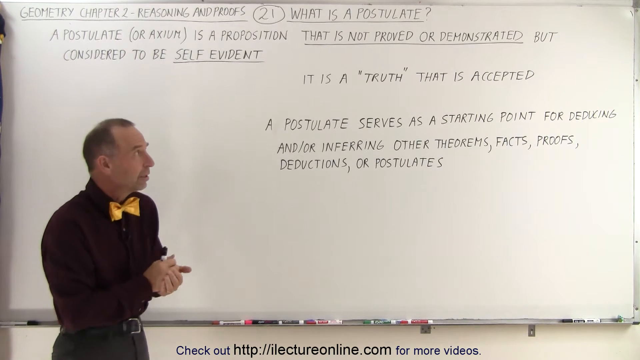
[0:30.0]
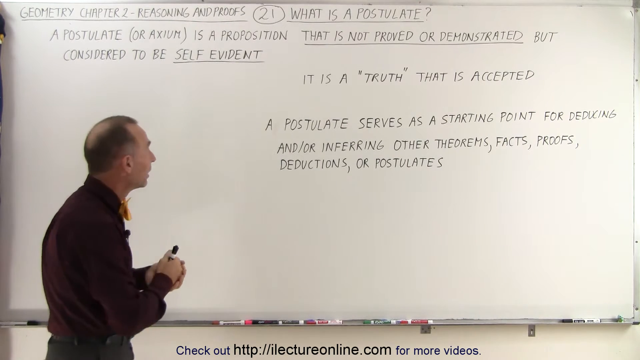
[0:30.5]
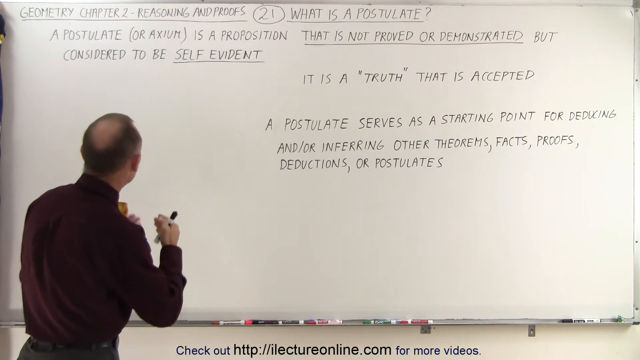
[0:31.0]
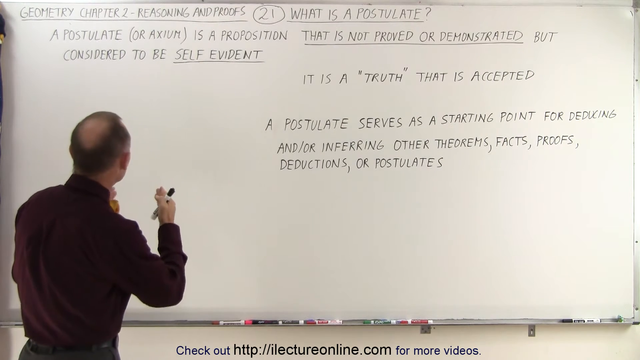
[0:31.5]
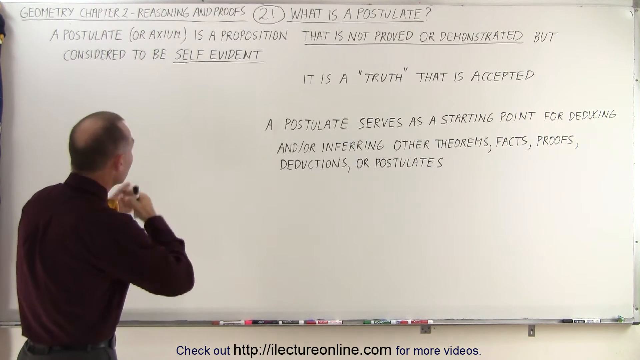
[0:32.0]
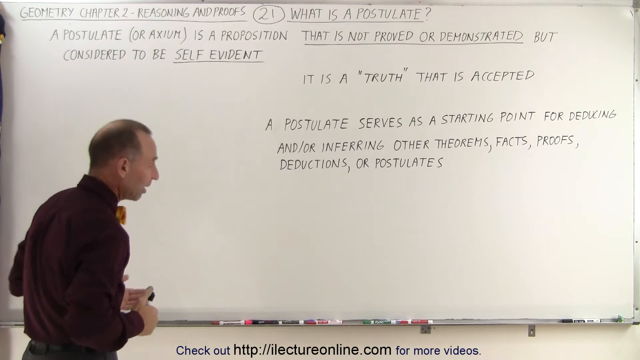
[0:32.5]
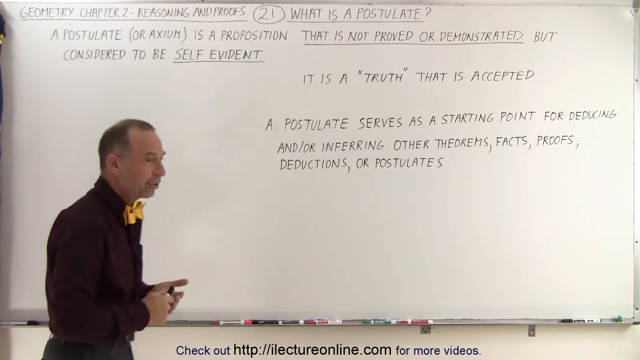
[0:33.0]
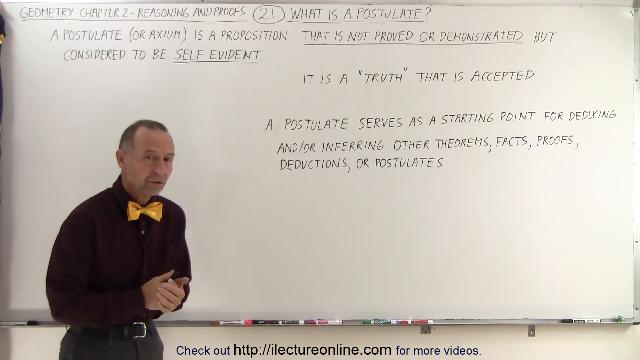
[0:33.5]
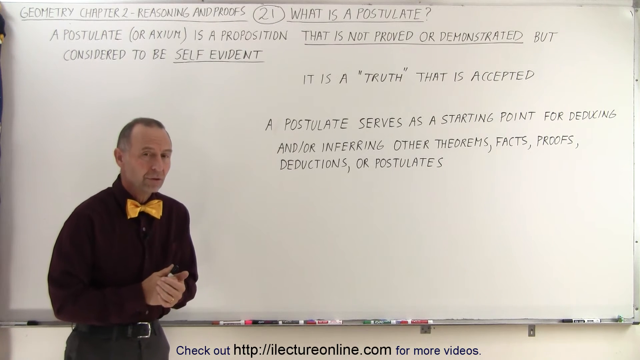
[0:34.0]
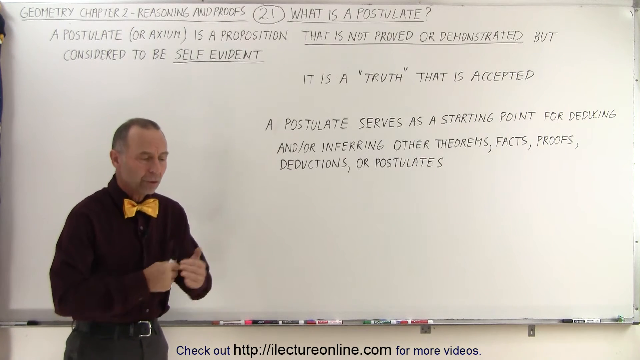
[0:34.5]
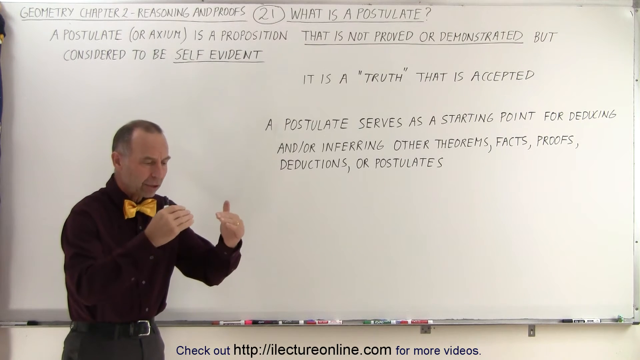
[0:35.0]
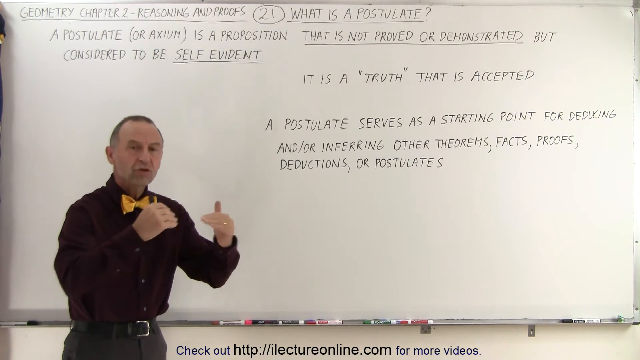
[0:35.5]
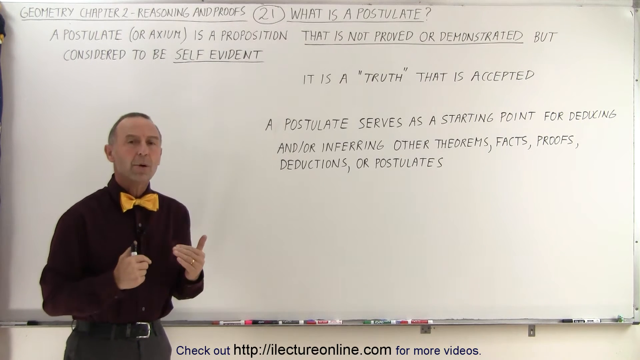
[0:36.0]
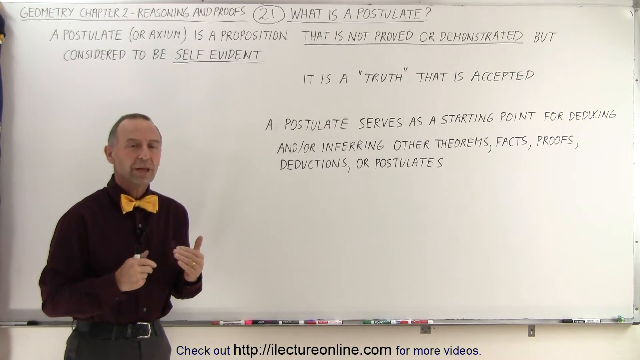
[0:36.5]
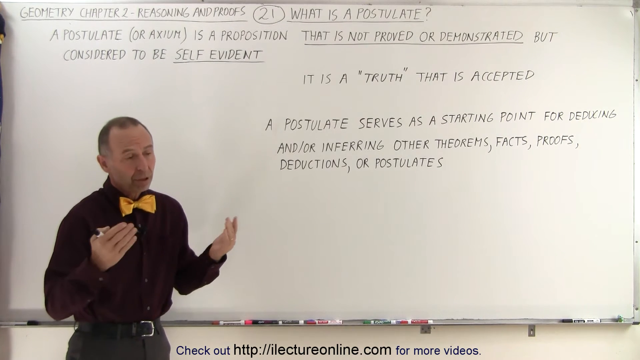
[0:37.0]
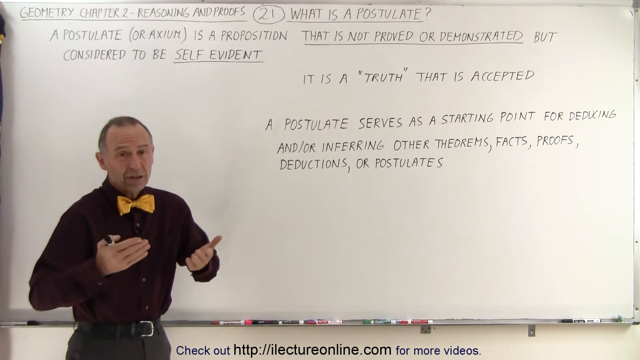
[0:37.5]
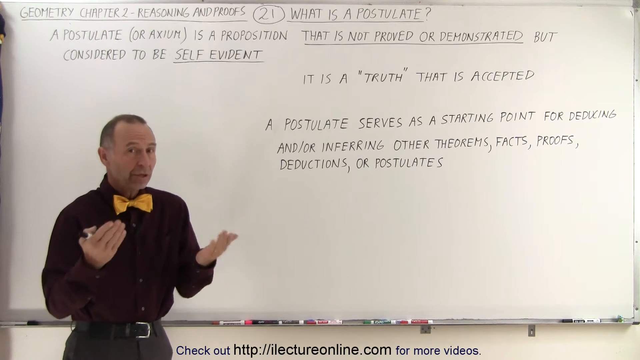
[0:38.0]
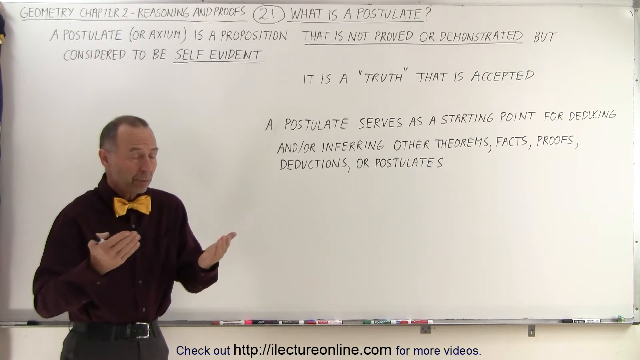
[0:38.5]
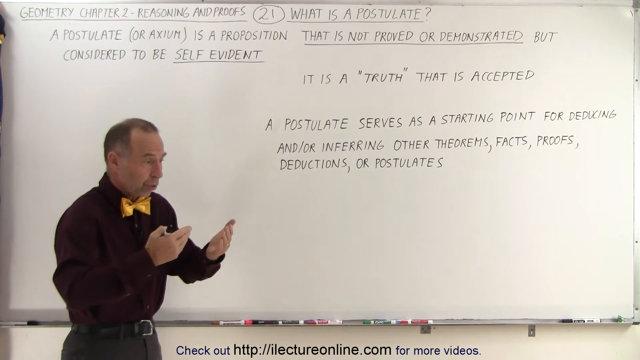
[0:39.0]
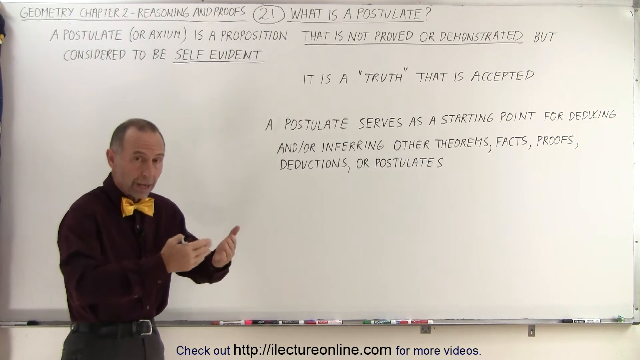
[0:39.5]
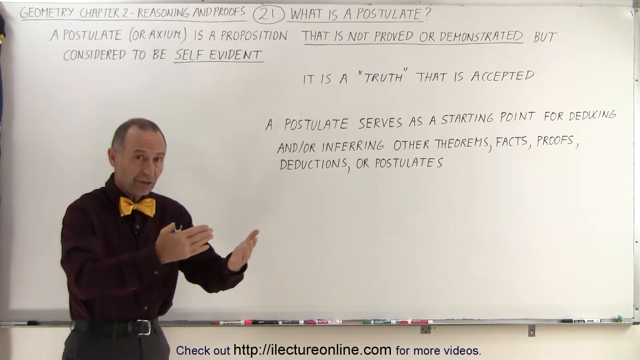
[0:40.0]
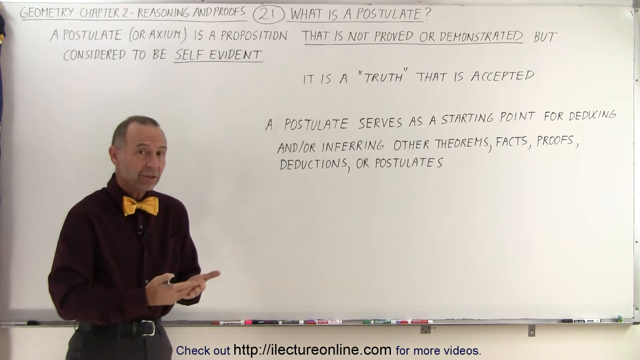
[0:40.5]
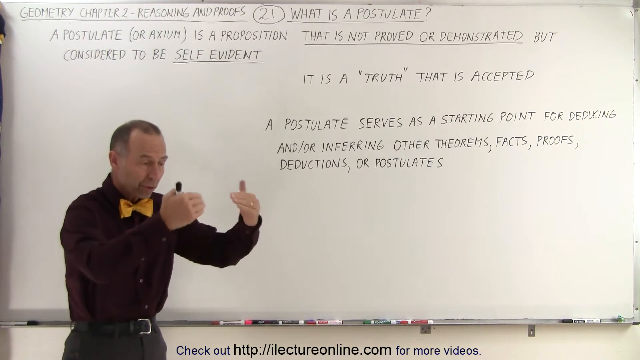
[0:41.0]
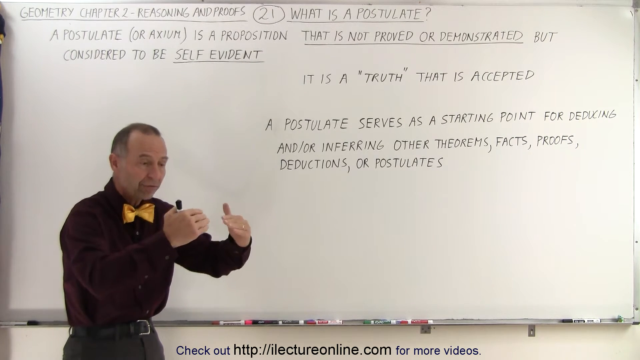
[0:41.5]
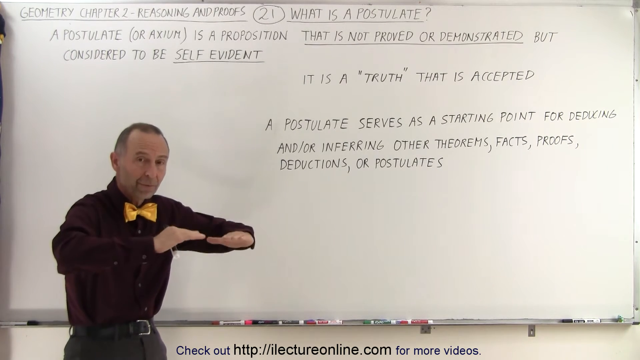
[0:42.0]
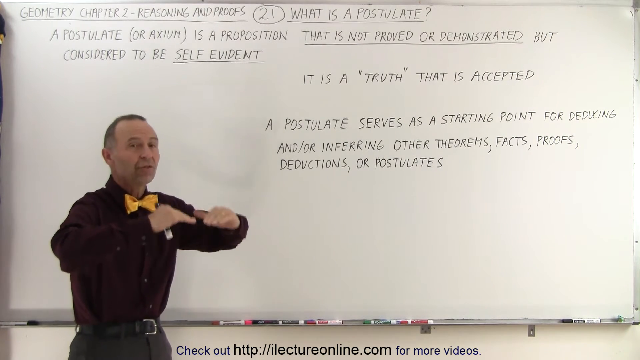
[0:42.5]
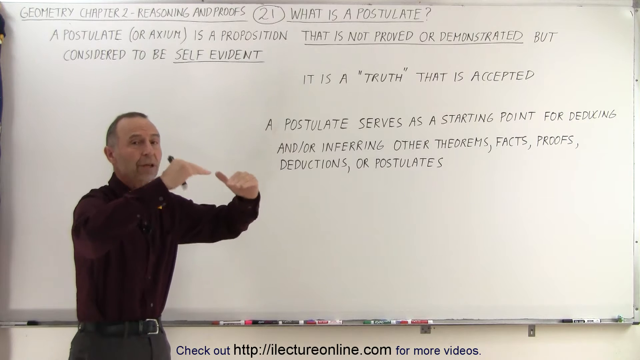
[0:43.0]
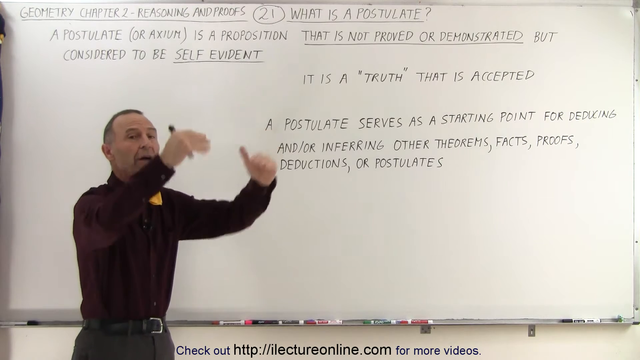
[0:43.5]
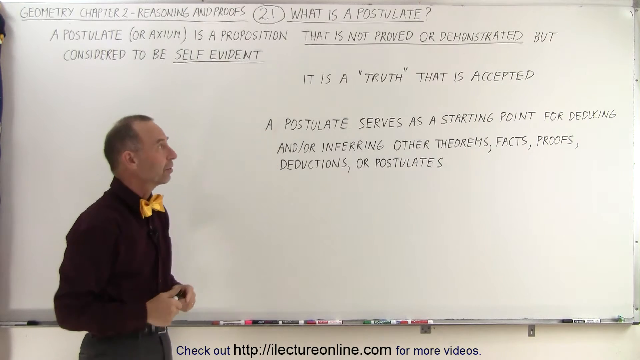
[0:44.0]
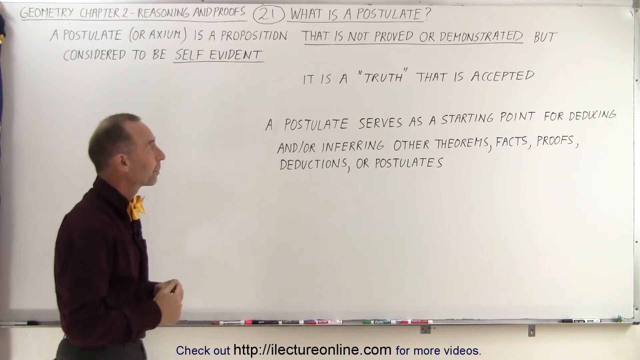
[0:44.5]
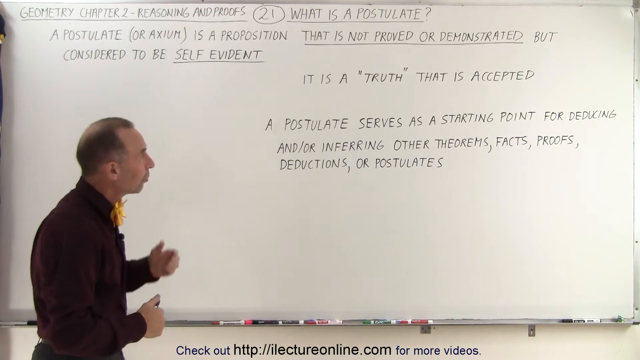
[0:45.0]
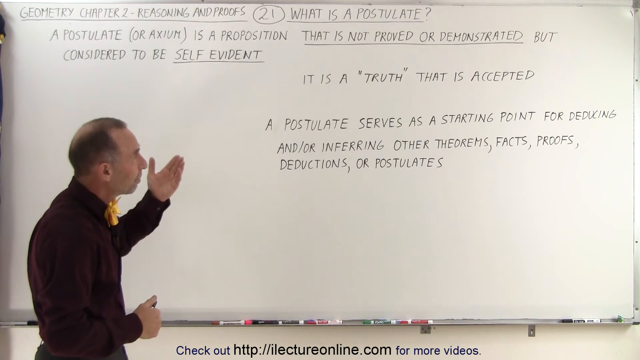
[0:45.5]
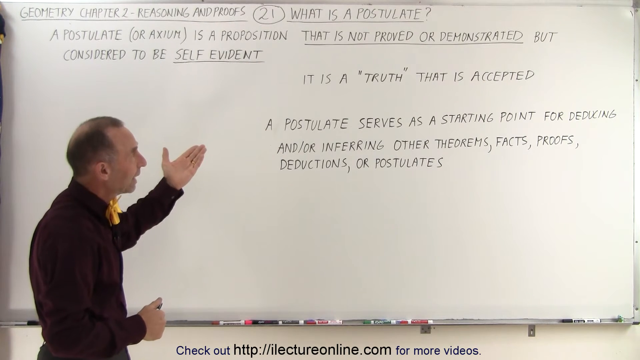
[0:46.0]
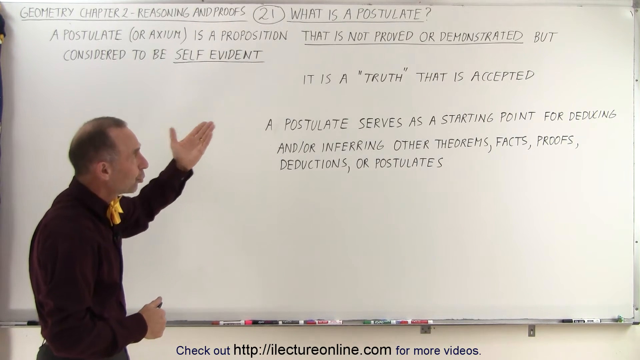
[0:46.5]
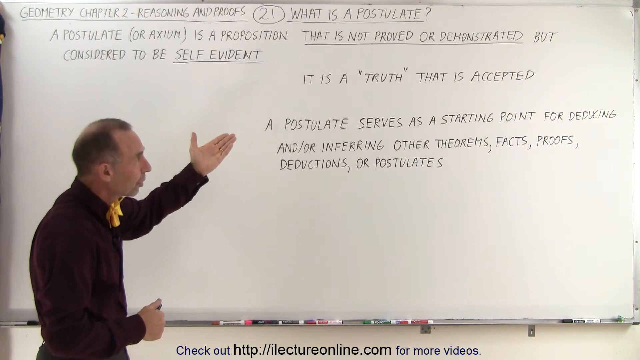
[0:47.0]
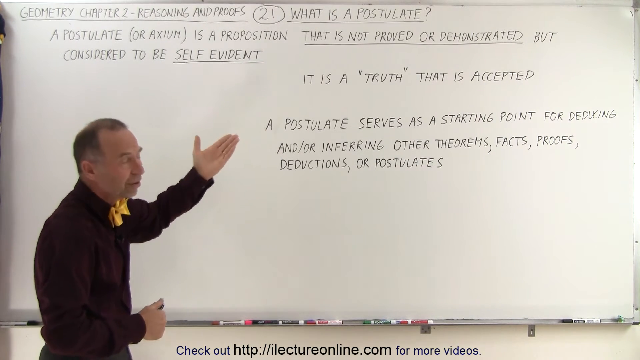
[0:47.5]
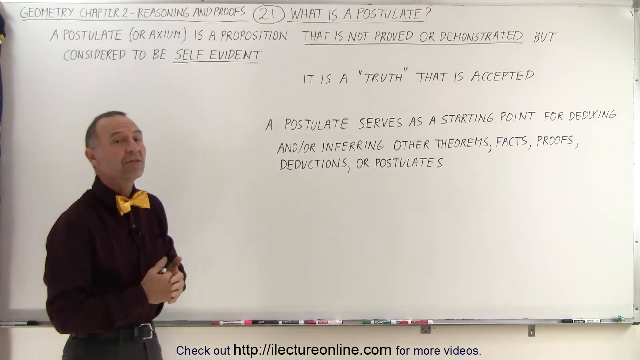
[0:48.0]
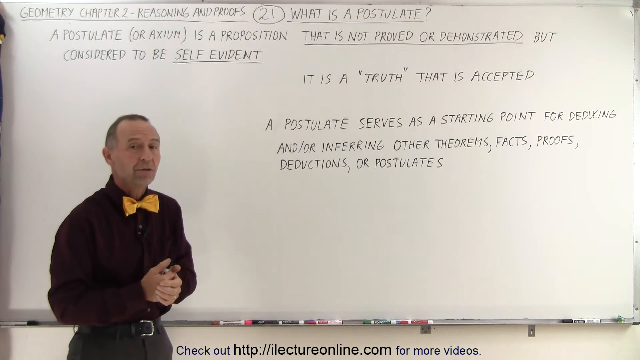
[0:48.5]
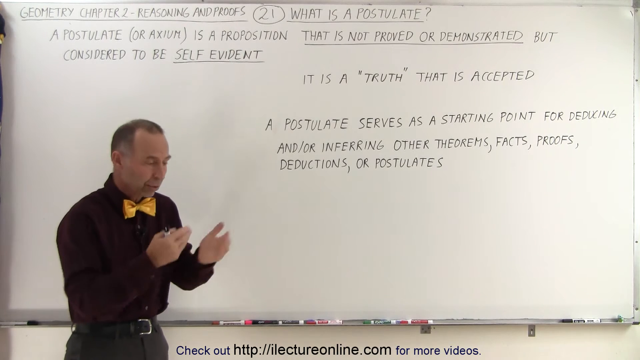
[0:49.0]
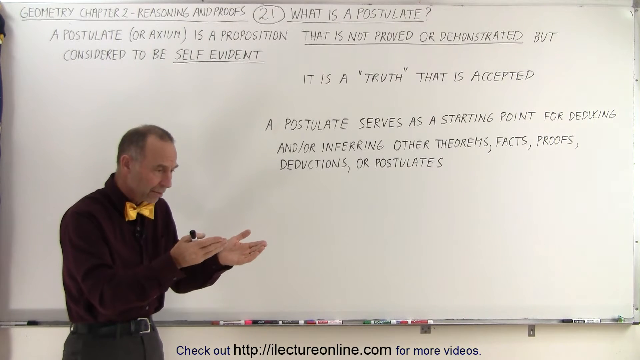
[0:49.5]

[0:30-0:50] The man, dressed in a black shirt, black pants and an orange bow tie, continues his postulate lecture in front of the whiteboard. He gestures with his hands while holding a marker, and gestures toward the postulate writing as if describing it. He does not write anything additional on the board, continuing to address what is already written there.